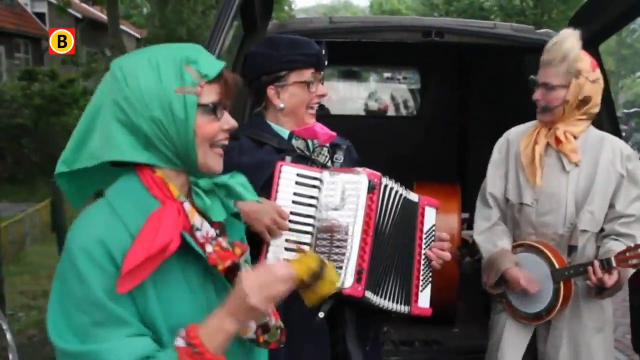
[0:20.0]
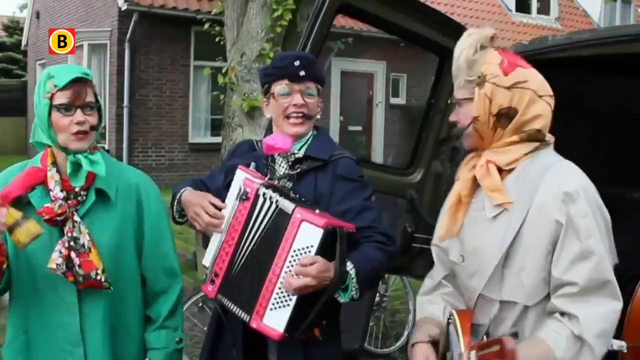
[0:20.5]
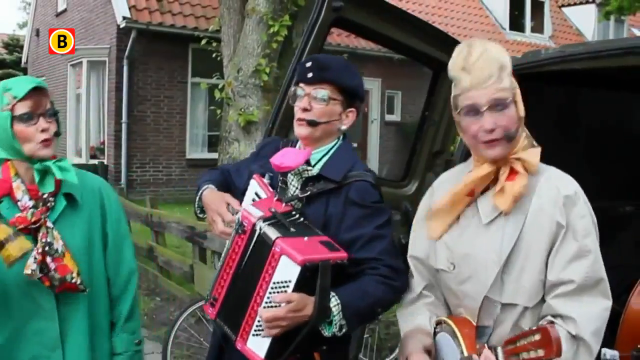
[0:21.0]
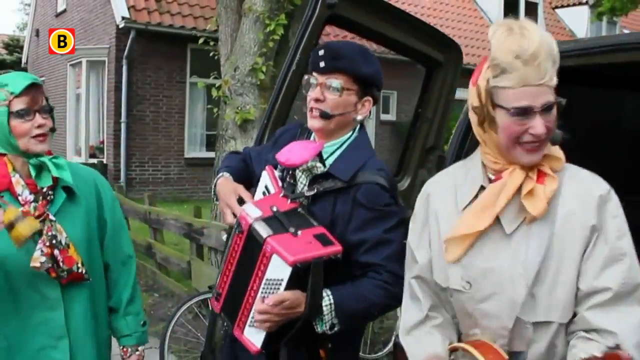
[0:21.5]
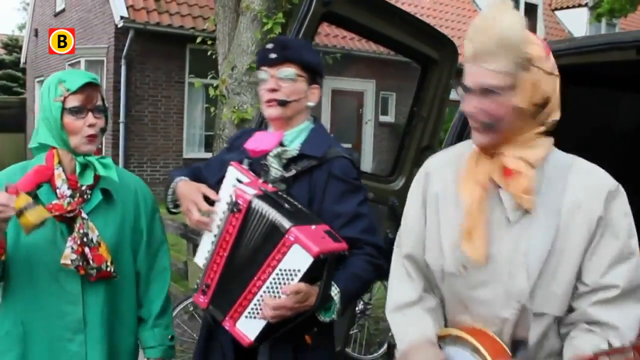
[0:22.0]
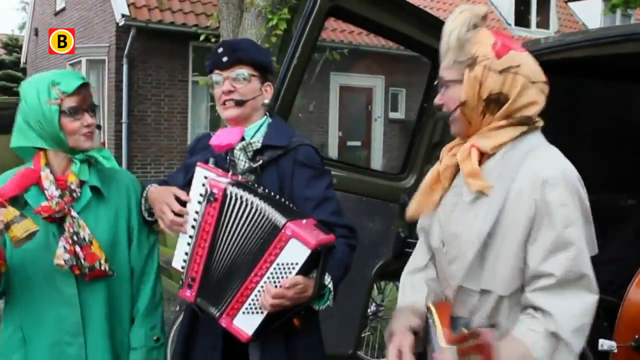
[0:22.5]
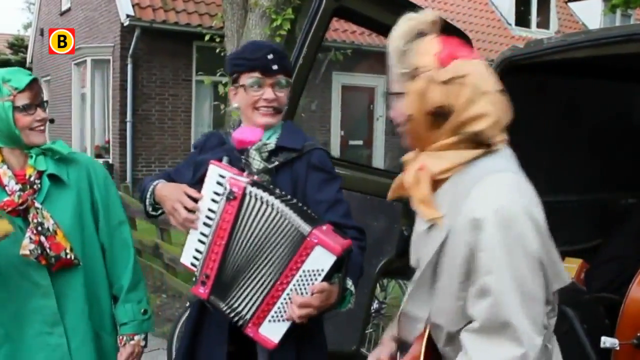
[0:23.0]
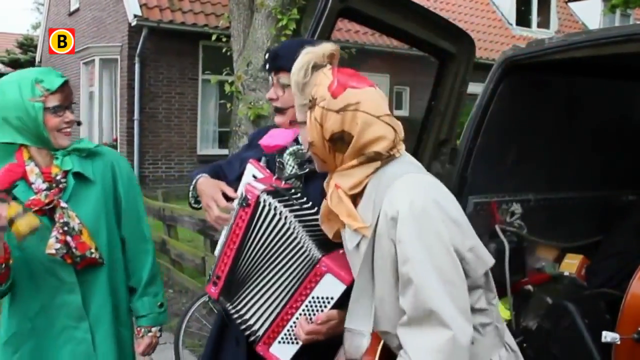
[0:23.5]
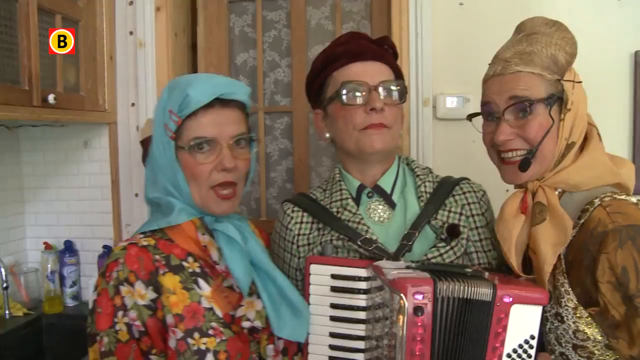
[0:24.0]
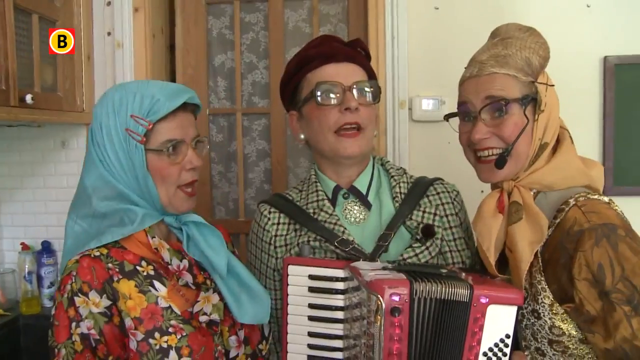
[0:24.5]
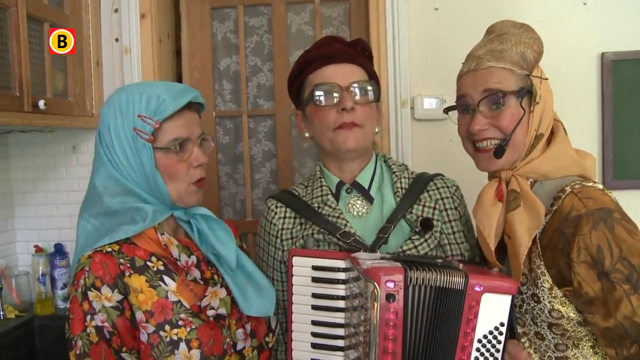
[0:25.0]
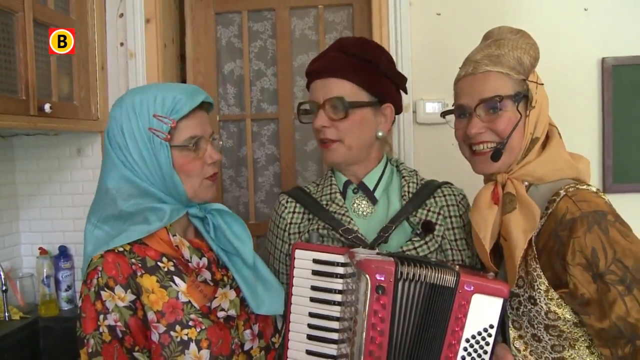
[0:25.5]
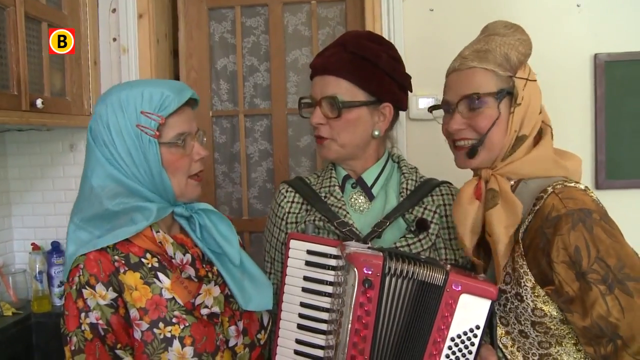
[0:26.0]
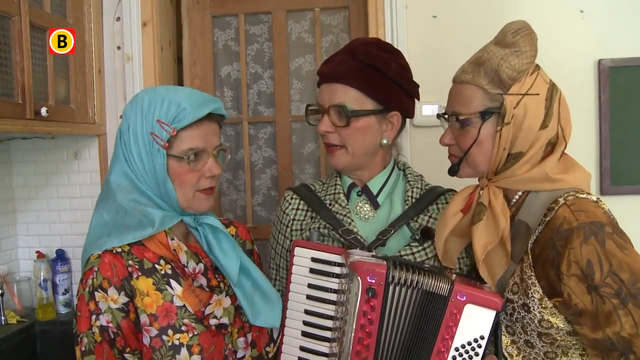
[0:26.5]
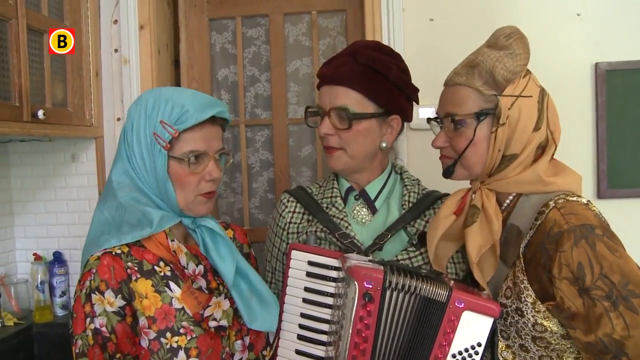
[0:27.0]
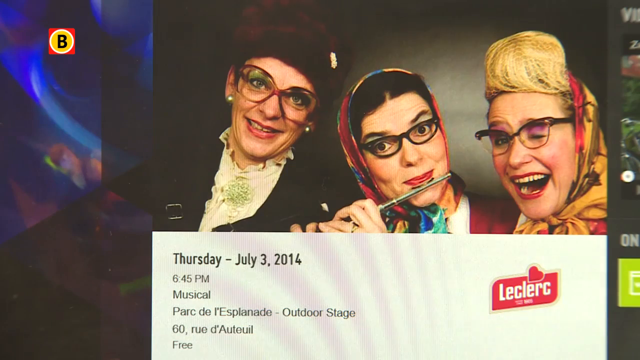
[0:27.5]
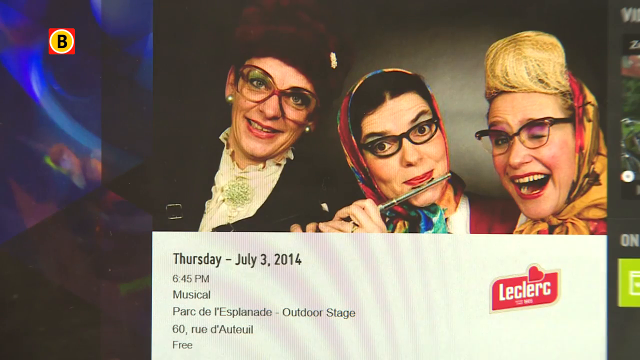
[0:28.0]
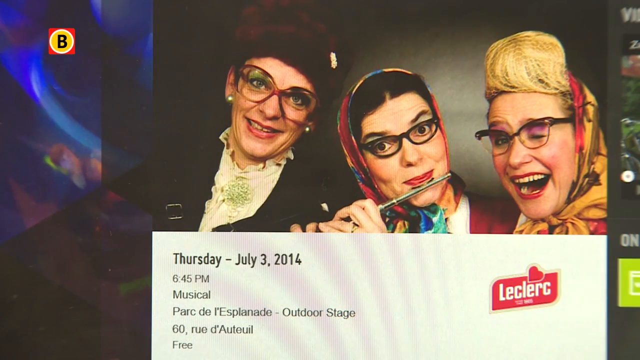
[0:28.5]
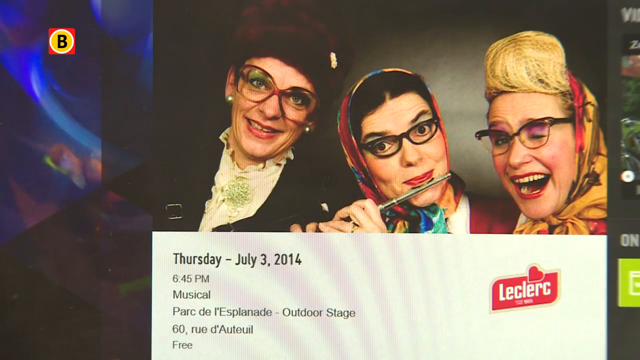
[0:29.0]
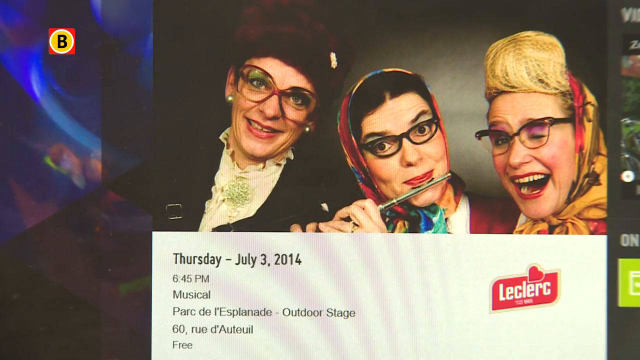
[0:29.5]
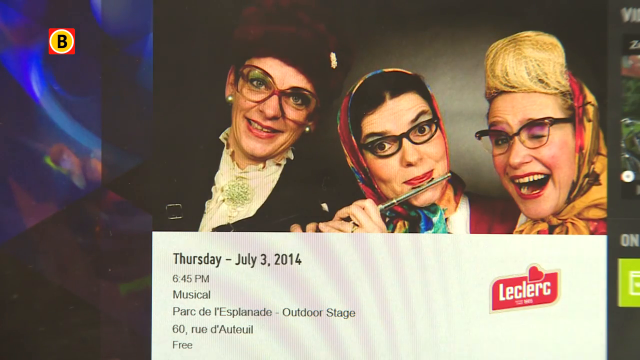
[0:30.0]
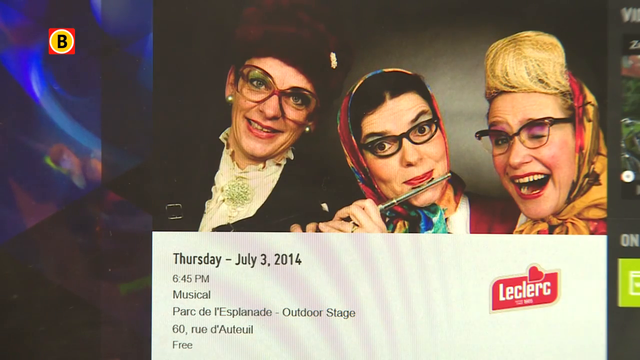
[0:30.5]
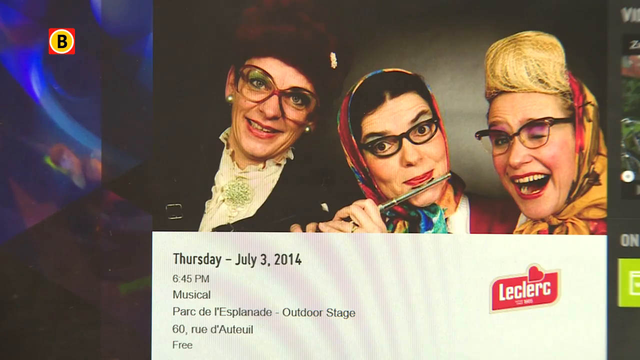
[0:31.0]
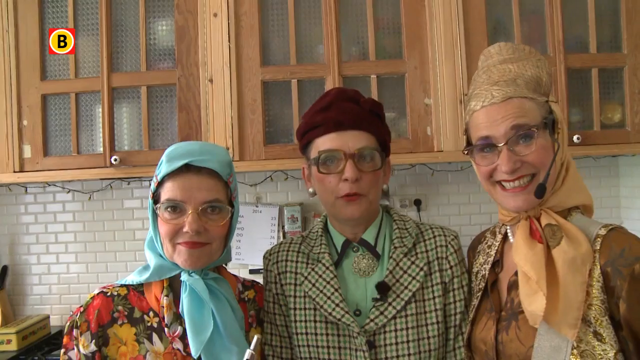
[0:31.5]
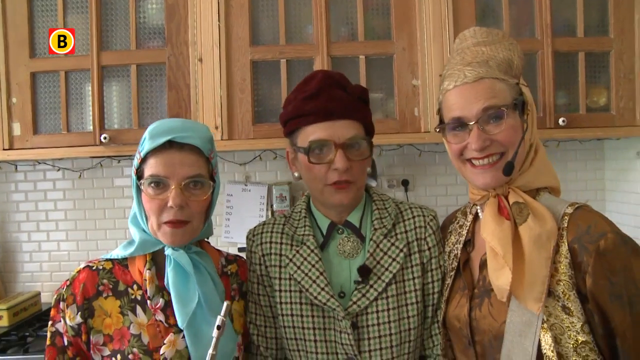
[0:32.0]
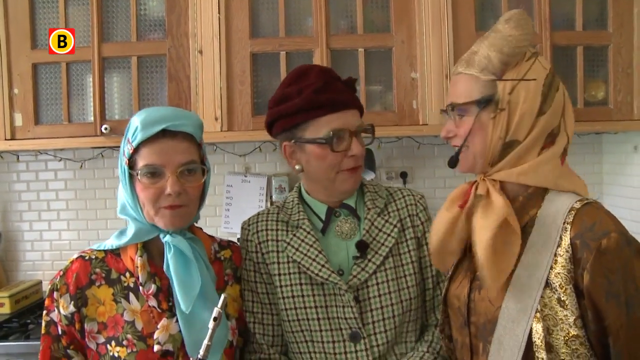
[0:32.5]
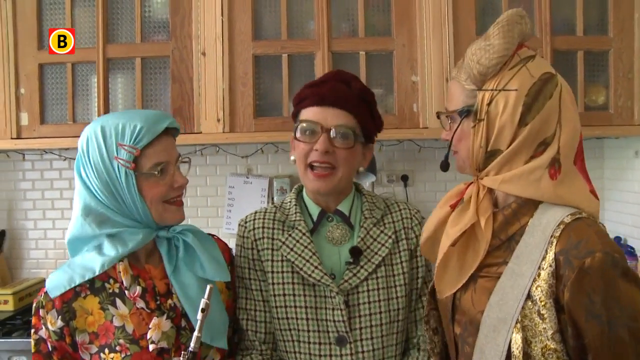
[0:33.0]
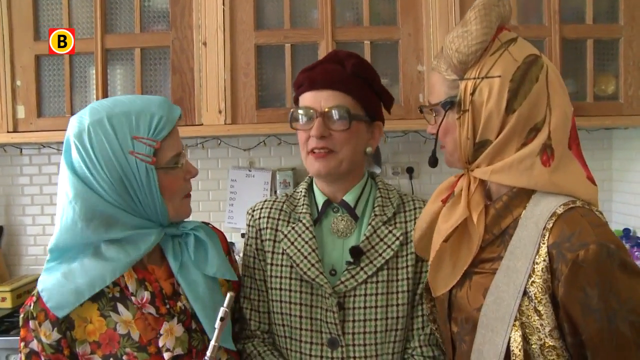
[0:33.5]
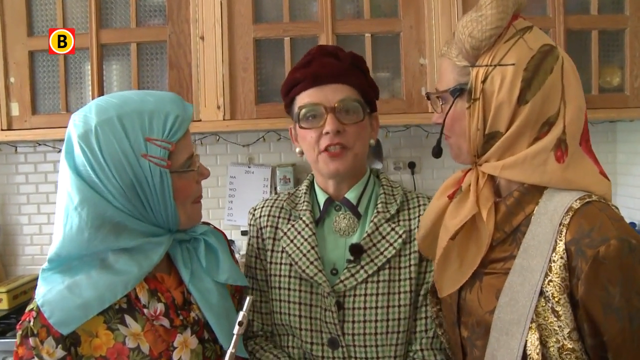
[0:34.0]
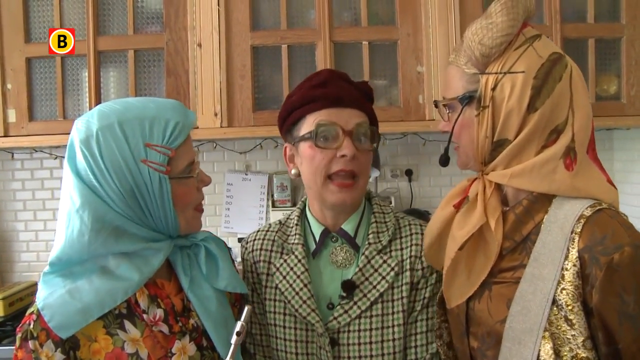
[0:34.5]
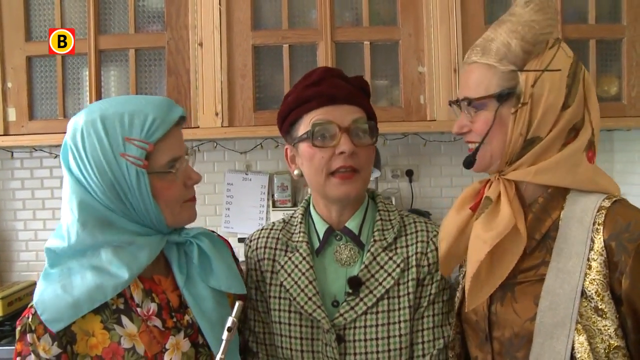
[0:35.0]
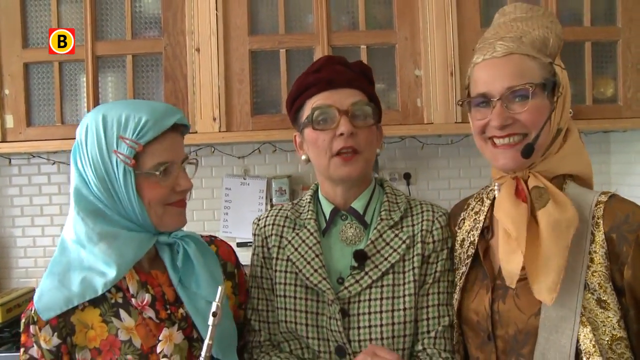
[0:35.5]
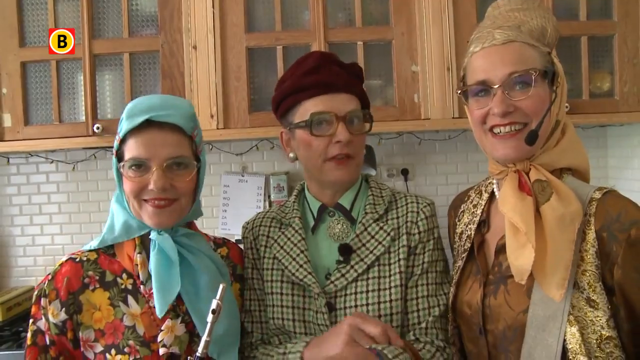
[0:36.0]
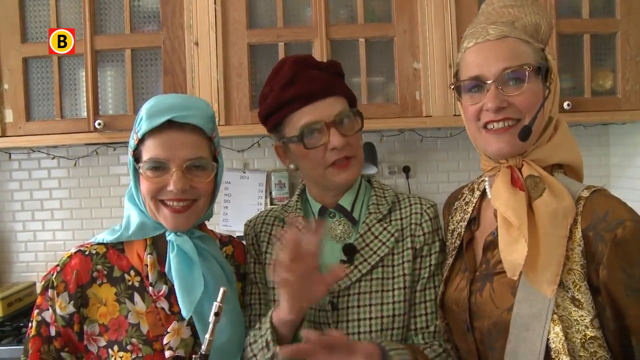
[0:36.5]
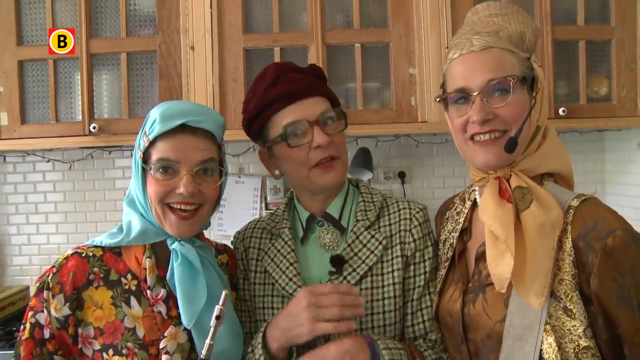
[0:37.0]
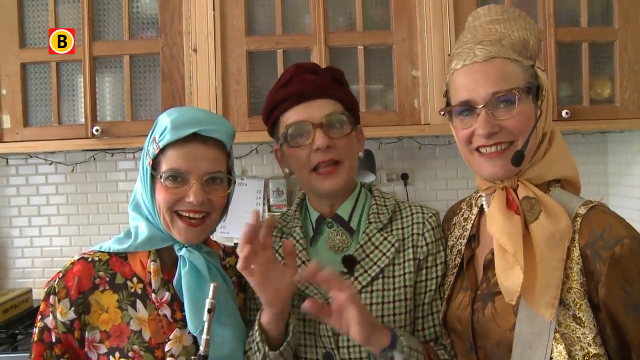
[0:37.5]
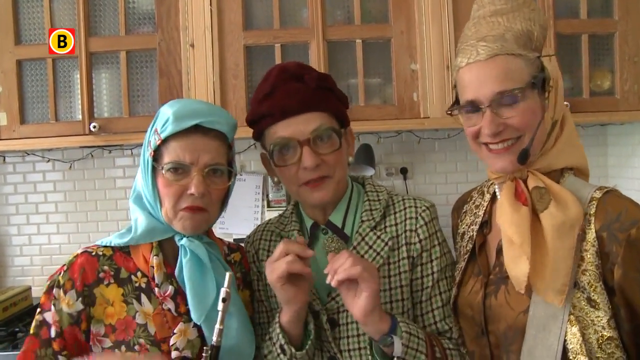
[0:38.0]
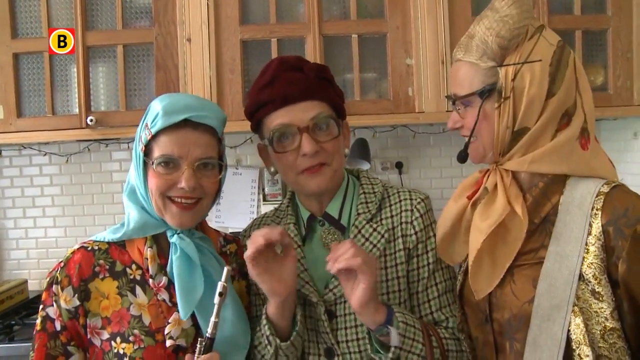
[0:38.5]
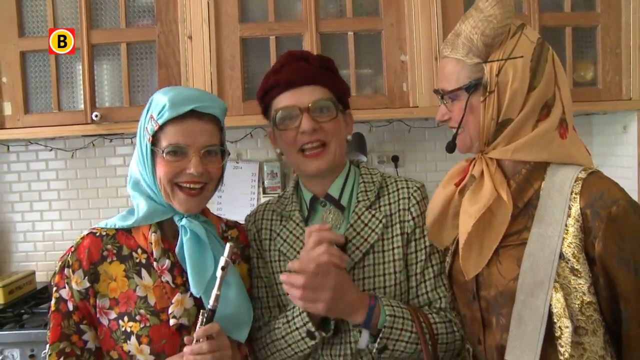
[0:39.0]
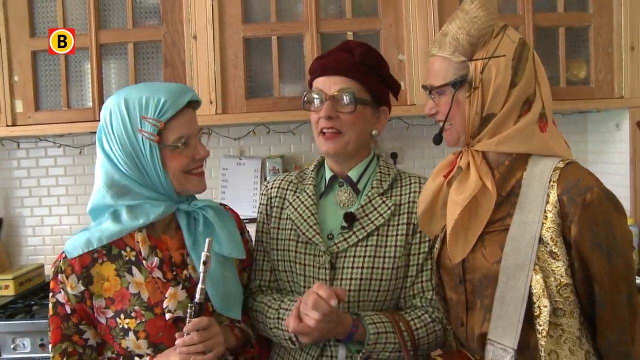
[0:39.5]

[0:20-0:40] Three women, all wearing headscarves, play various instruments behind a commercial van painted black. Both back doors of the van are opened wide, and inside, a cello lies on its side in the back of the van. The woman on the right plays a banjo and wears a tan raincoat with a peach floral headscarf. The one in the center wears a black headscarf with a black coat and plays a red accordion. The woman on the left wears a green coat with a matching green headscarf and plays a yellow painted cowbell. The women seem to be singing into microphones attached to their heads. The video cuts to the women in a different filming location, an indoor home-like kitchen. It then cuts to a photograph of a webpage showing the women in a photo and listing an outdoor stage event and concert for them on Thursday, July 3rd, 2014 at 6:45 p.m., held at the Parque de Esplanade outdoor stage. It cuts back to the women in the kitchen, talking toward the camera, with the other two women looking at whoever is taking a turn to talk. The woman in the center appears to do much of the talking, and she waves at the camera.